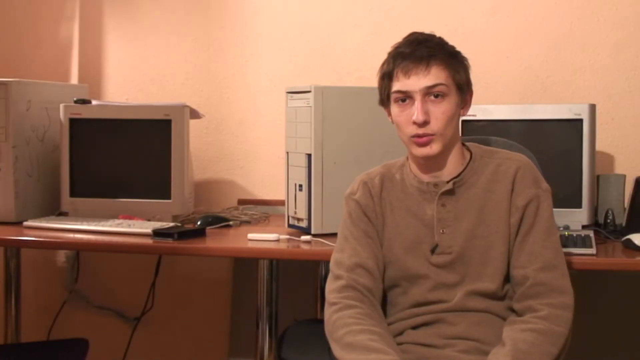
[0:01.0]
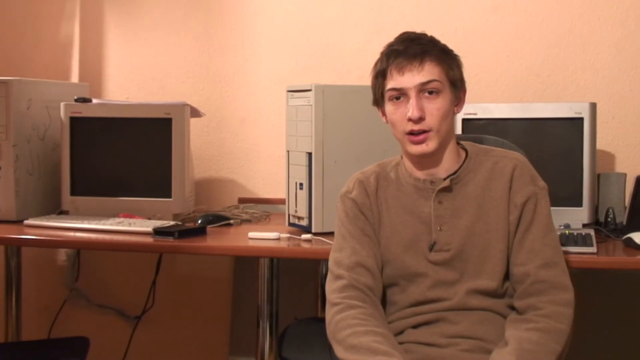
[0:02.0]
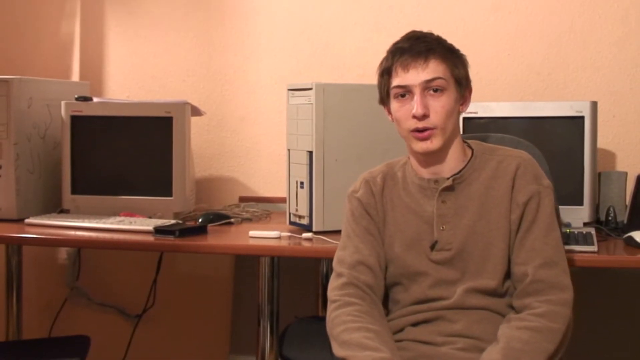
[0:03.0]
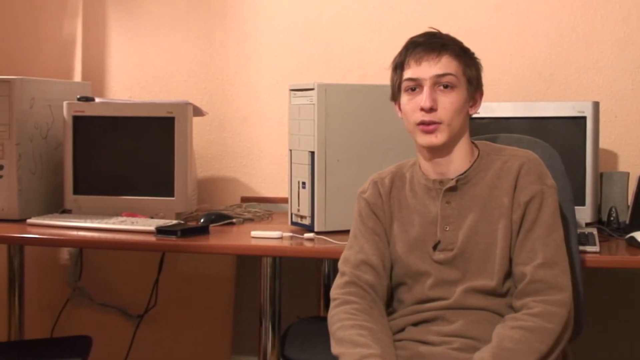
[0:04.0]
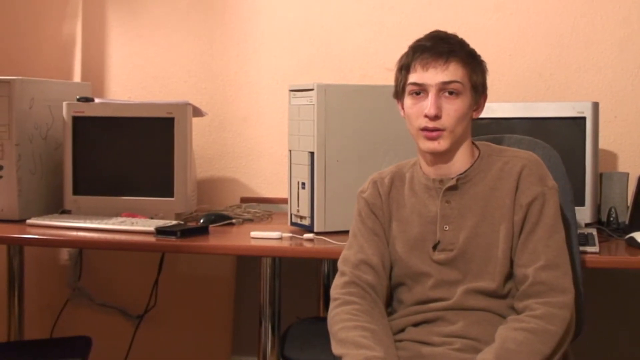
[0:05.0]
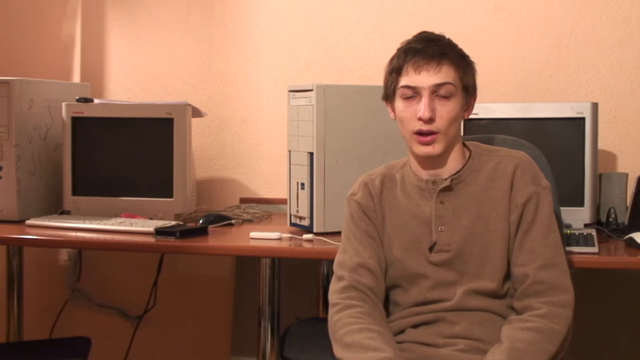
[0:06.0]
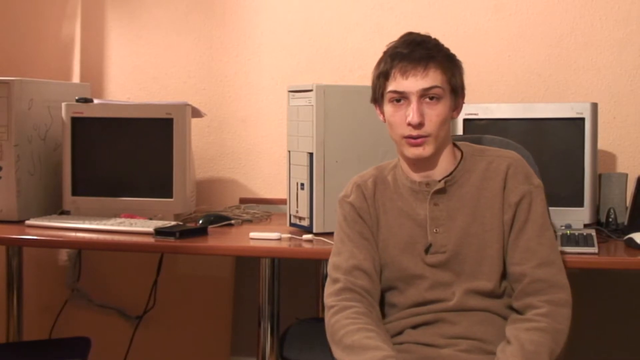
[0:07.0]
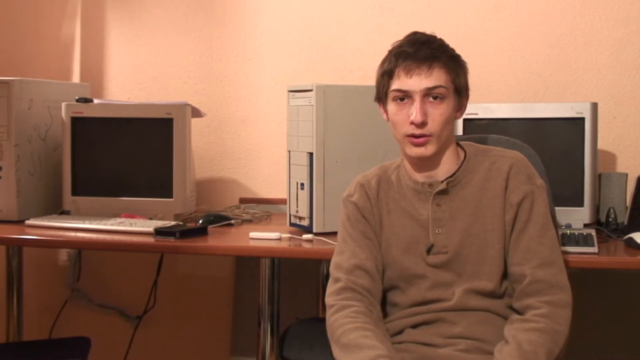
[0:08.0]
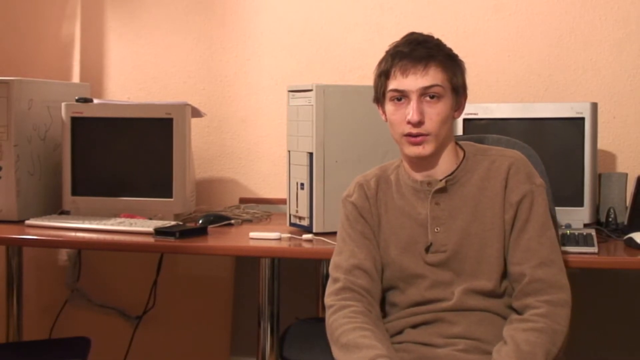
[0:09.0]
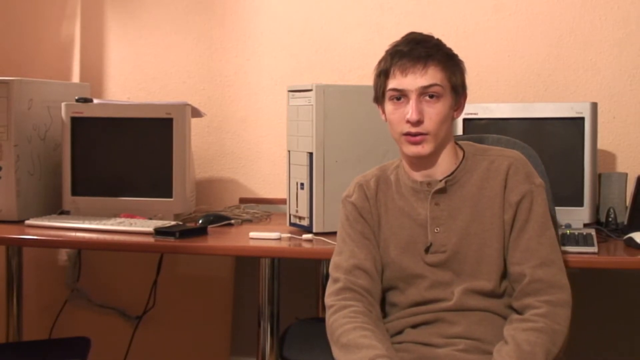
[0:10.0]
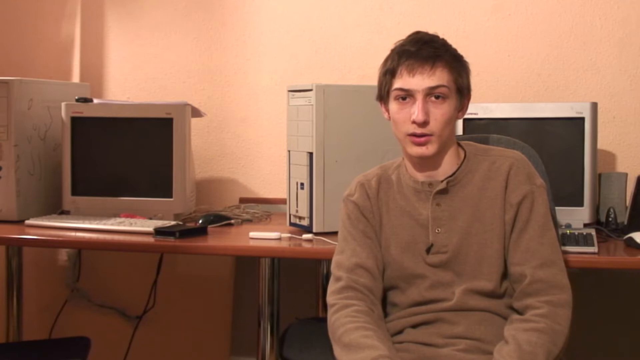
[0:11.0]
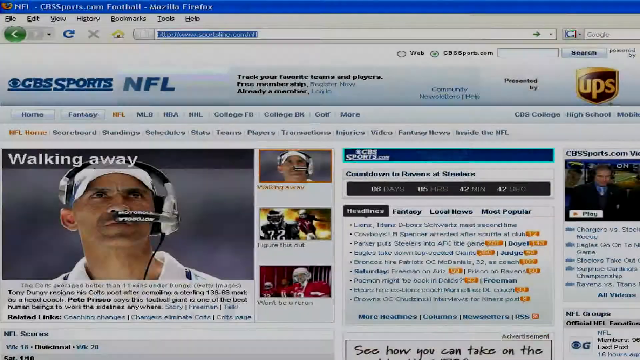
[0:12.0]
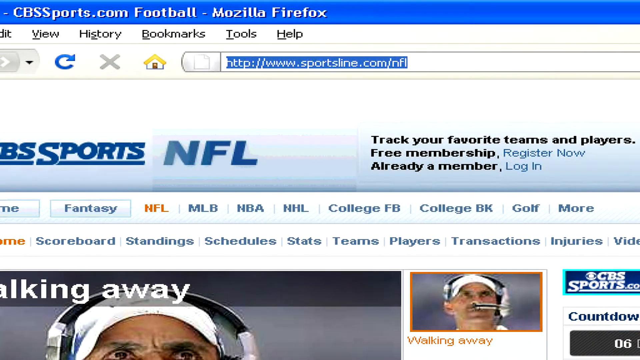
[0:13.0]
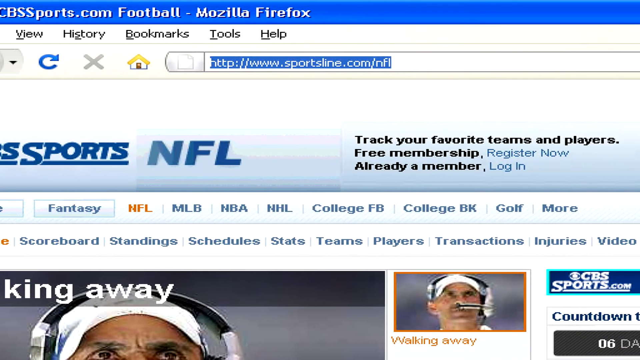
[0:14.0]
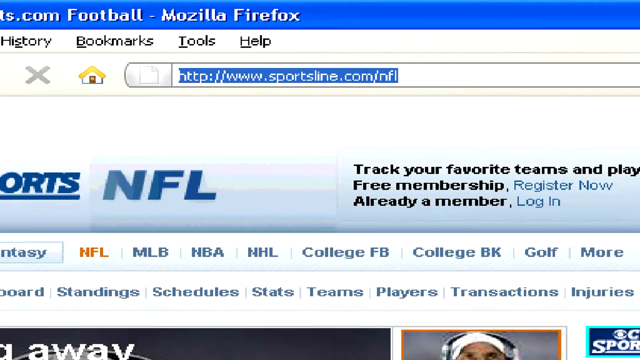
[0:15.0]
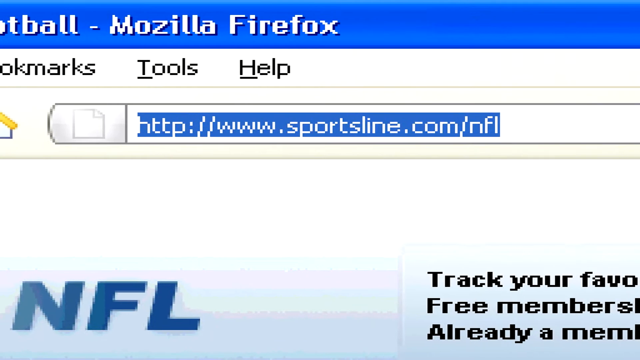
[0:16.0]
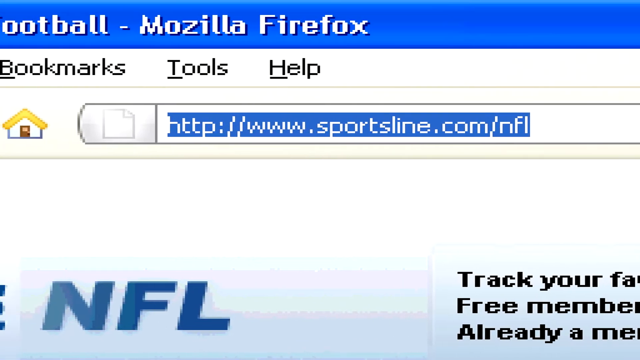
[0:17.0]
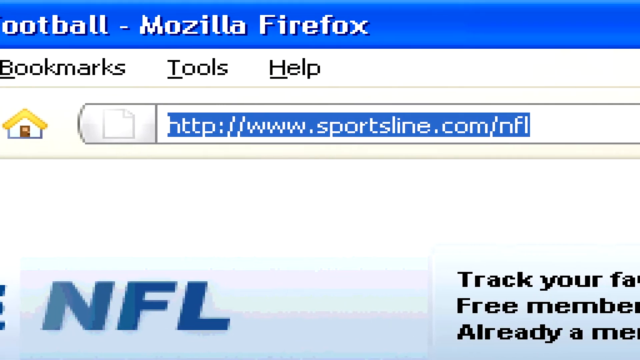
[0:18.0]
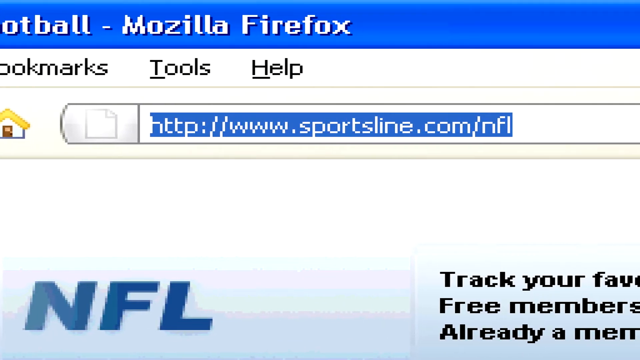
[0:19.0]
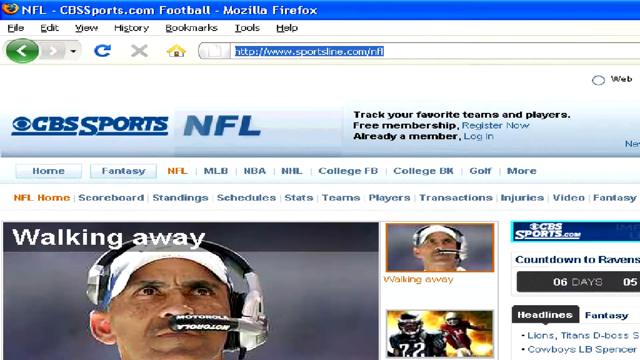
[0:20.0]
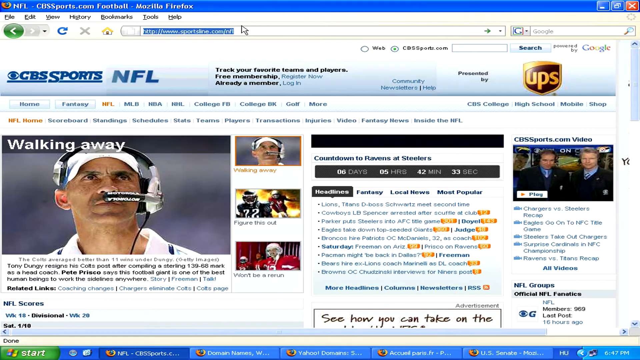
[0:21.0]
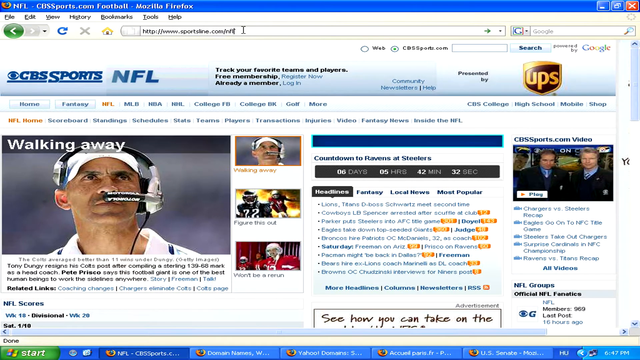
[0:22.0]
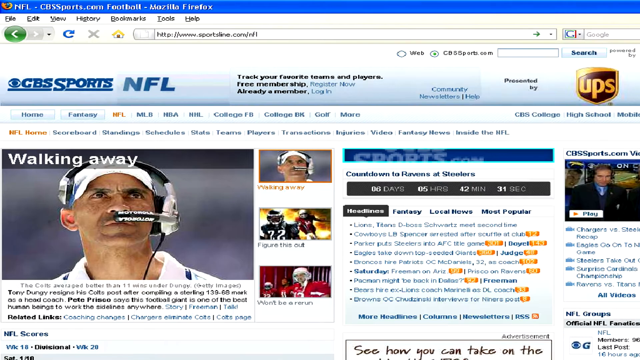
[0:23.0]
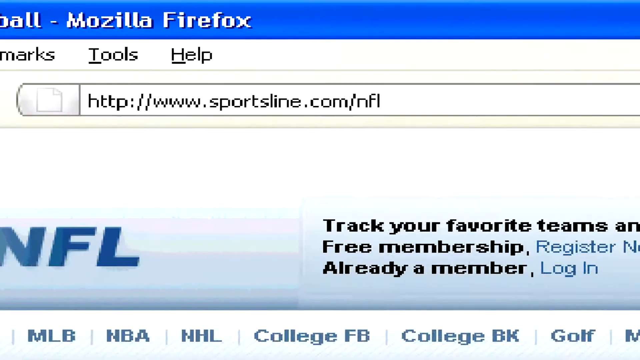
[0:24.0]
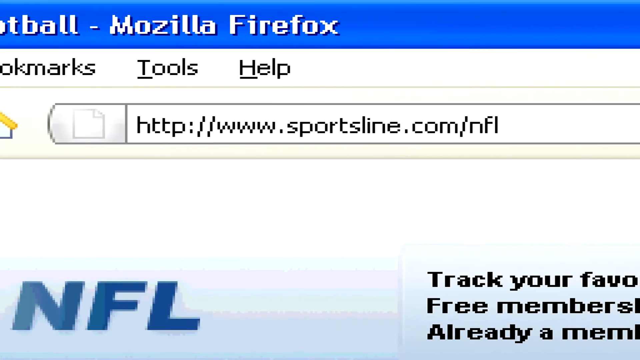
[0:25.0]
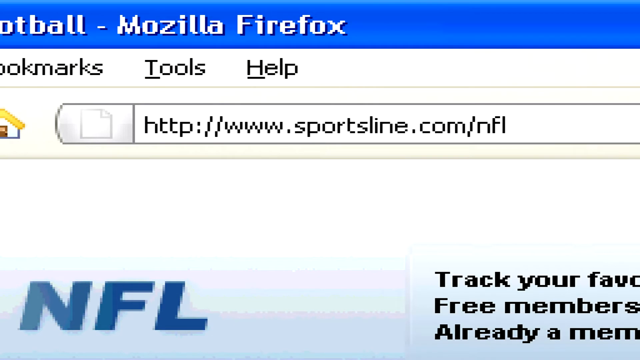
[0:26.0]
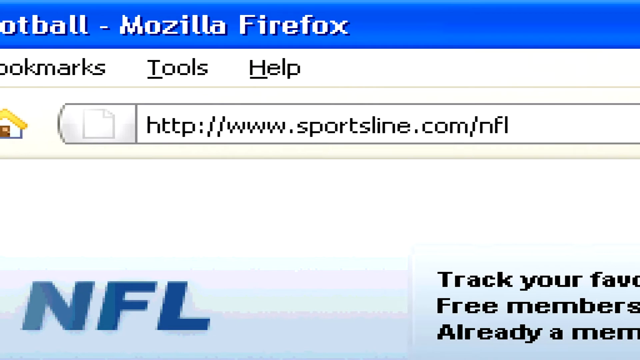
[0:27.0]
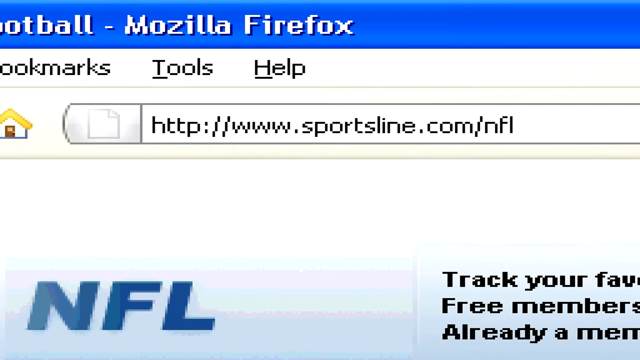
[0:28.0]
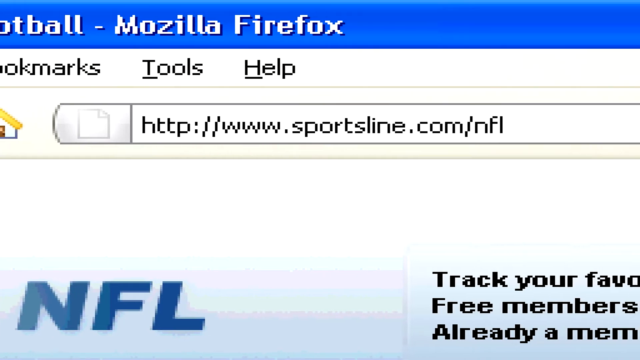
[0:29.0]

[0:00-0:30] A young man, probably in his teens or early 20s, is sitting in what looks like a somewhat older video, maybe from the late 90s or early 2000s. He wears a button-up long-sleeve shirt that is kind of dark brown or beige, and his hair looks a little thick on the sides. There is a long desk with two old-school computer monitors that are not flat screens but have big bulky backs. Between them on the table is a large tower that is kind of off-white, and there is also a tower all the way to the left. The wall looks terracotta or a little lighter, with a kind of pinkish tone. He is sitting in a swivel seat with his arms in front of him, swiveling a little back and forth as he talks. Various white cords come out from behind him to the left, along with what looks like a black mouse and a bundle of wires behind that. It looks like someone wrote on the side of the leftmost tower with something like a sharpie, though it doesn't look like anything in particular, almost like branches from a tree. Underneath, an outlet has black cords connected to it. The view then goes to sportsline.com/NFL in the address bar at the top, with a blue section underneath it and a menu with edit, view, history and bookmarks. He has highlighted sportsline.com and zooms in pretty far on it in a kind of jerky motion, then zooms out again. He is on the NFL tab, which is kind of orange. Underneath, the page shows an item about Tony Dungy saying he is walking away, with a picture of him wearing a headset and looking up and out. He zooms in on the web address again, with a jolting, jagged left-and-right motion.